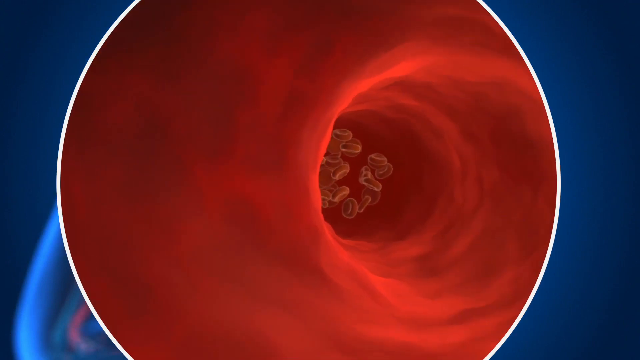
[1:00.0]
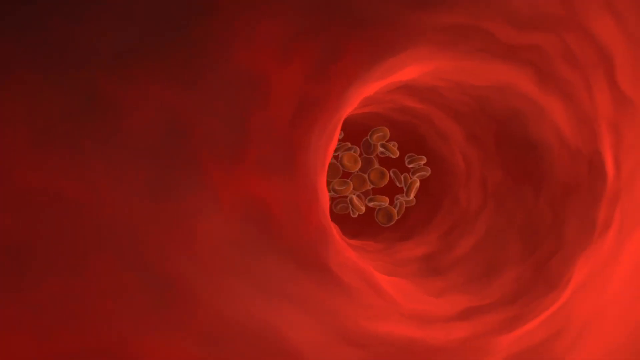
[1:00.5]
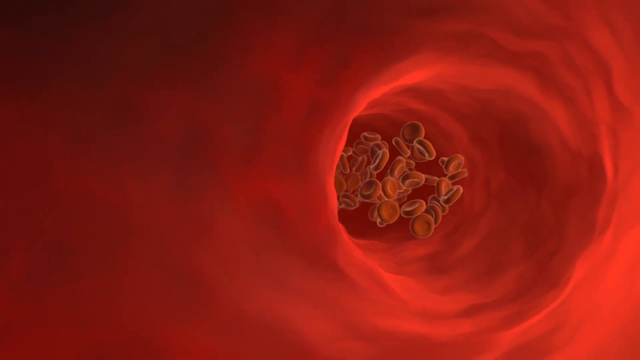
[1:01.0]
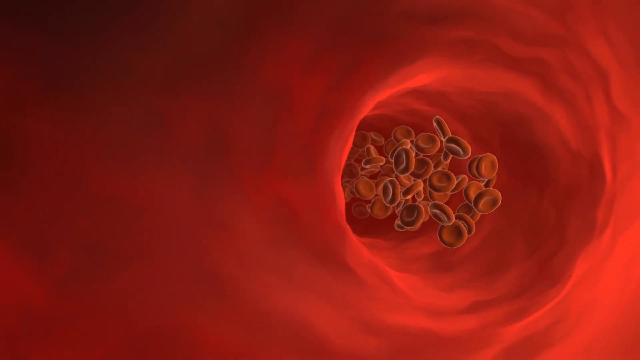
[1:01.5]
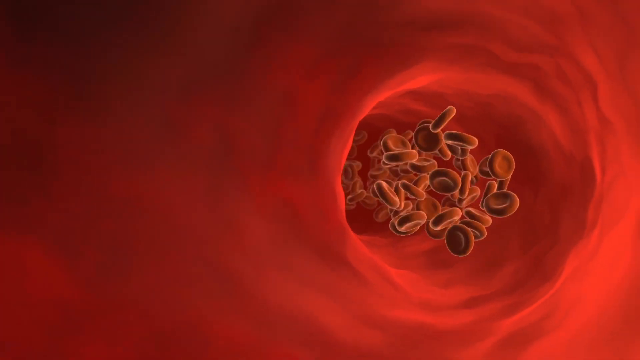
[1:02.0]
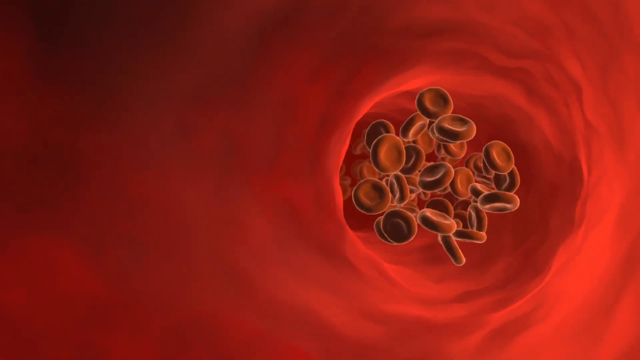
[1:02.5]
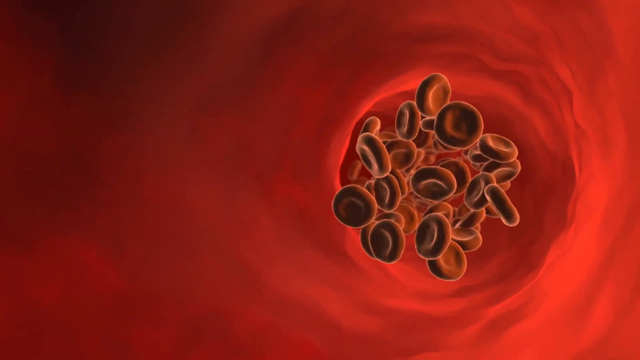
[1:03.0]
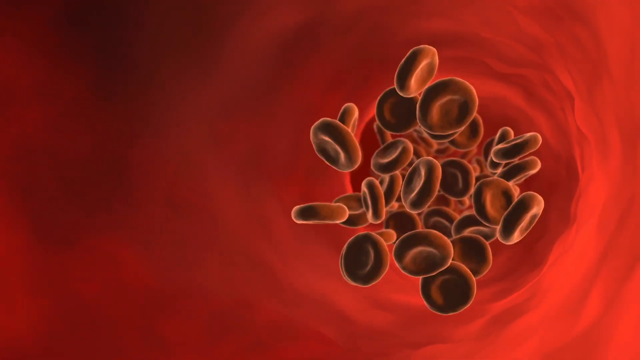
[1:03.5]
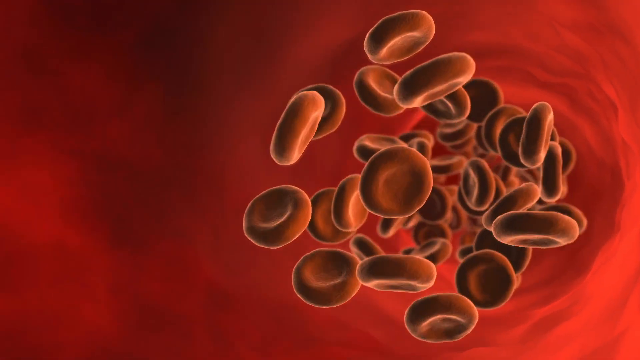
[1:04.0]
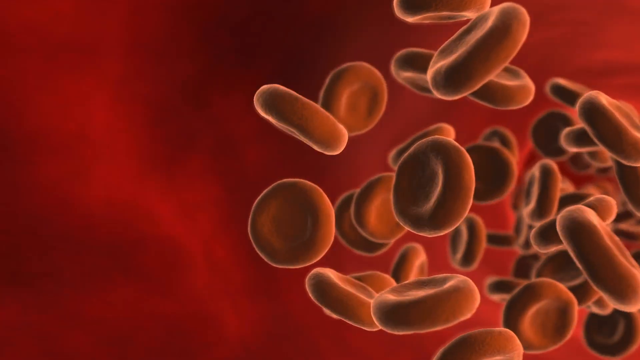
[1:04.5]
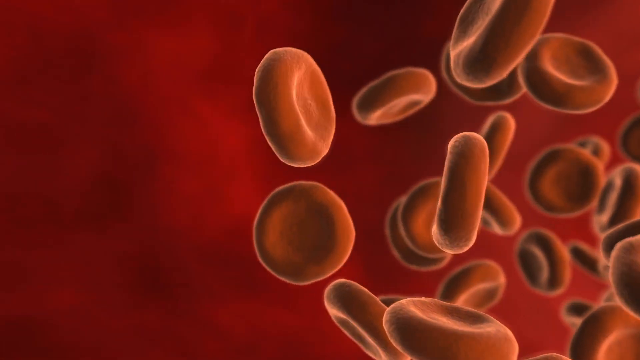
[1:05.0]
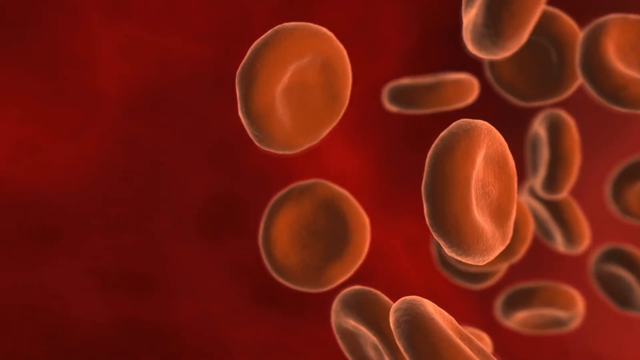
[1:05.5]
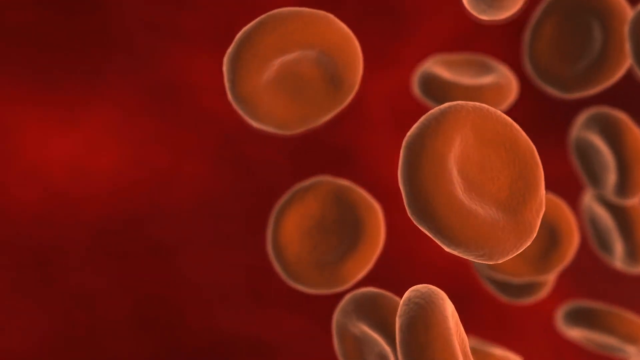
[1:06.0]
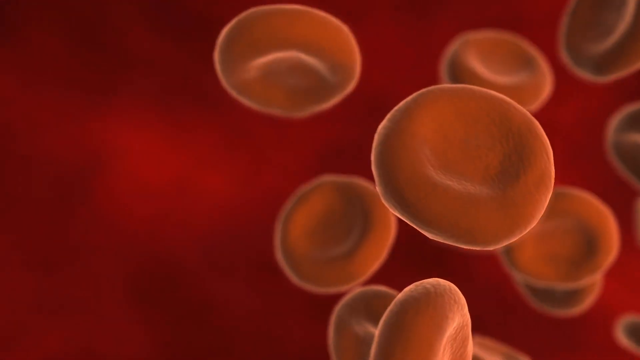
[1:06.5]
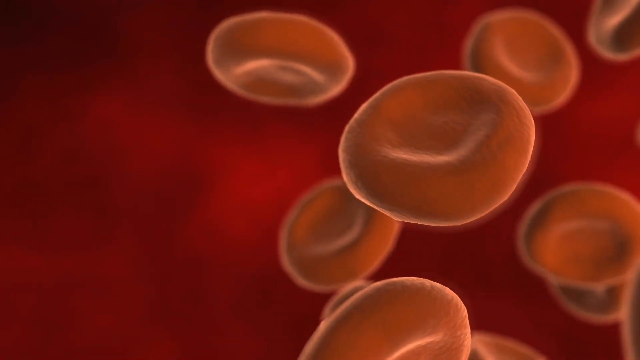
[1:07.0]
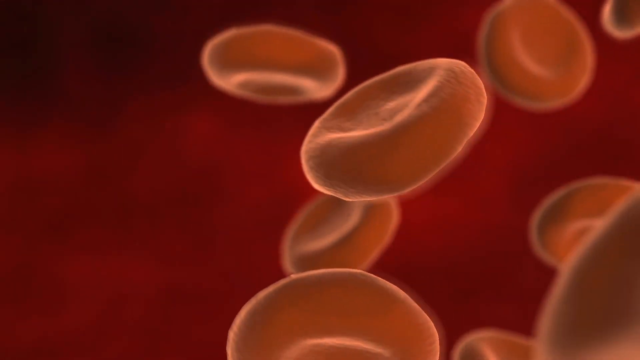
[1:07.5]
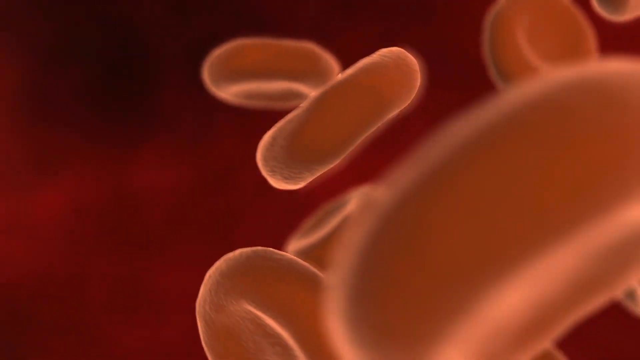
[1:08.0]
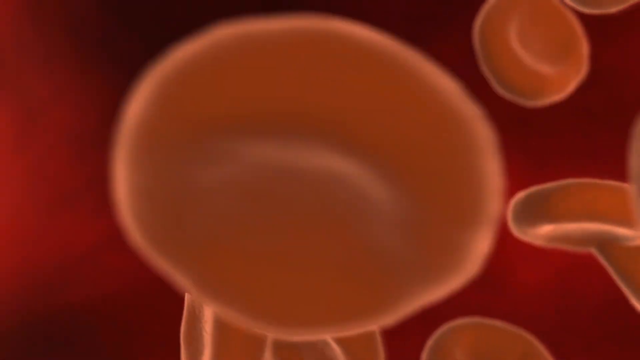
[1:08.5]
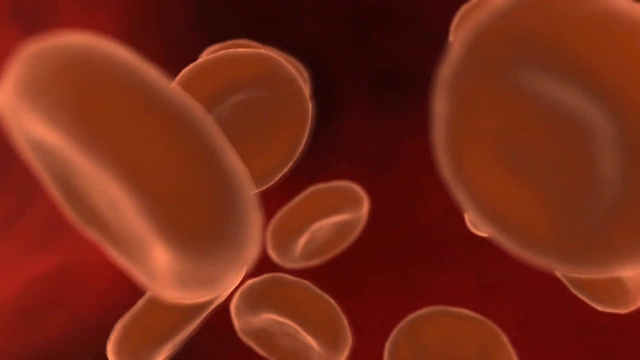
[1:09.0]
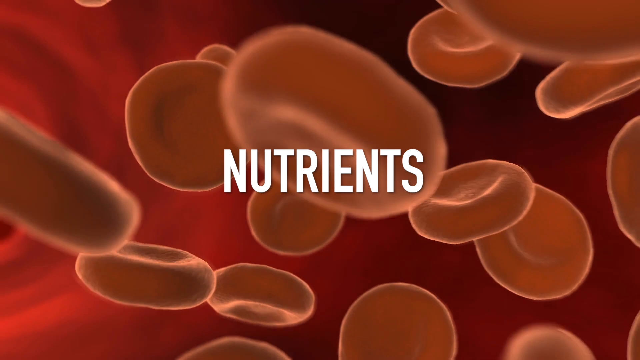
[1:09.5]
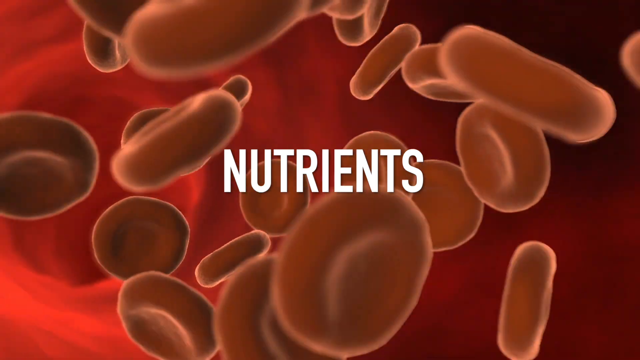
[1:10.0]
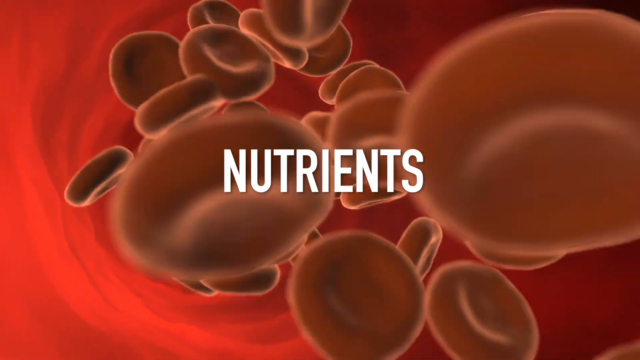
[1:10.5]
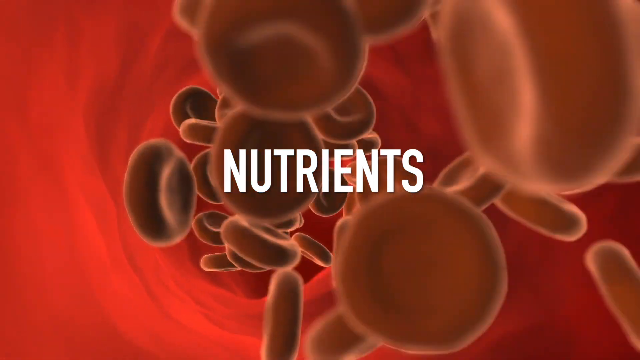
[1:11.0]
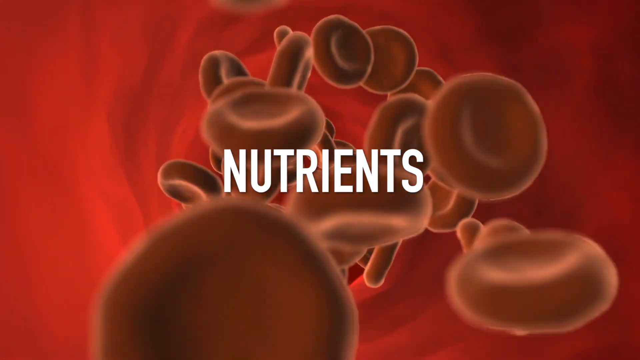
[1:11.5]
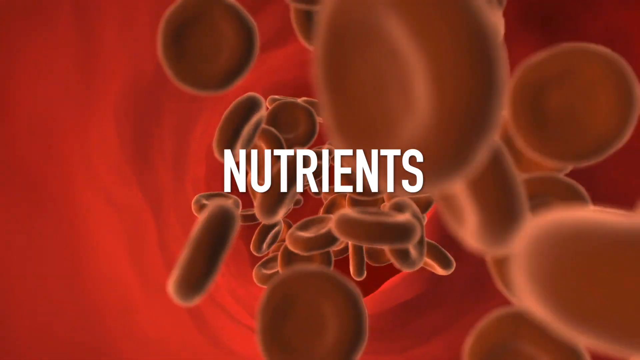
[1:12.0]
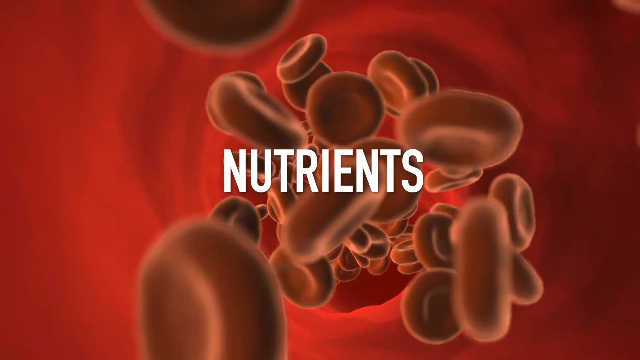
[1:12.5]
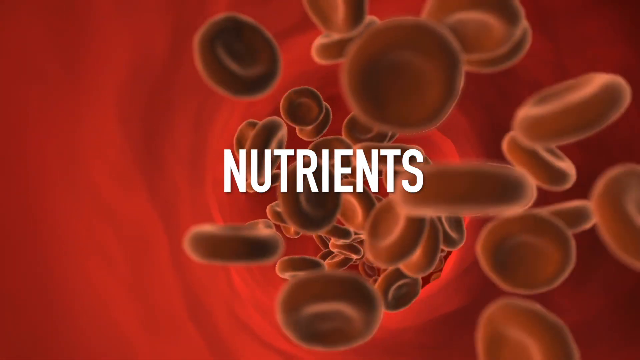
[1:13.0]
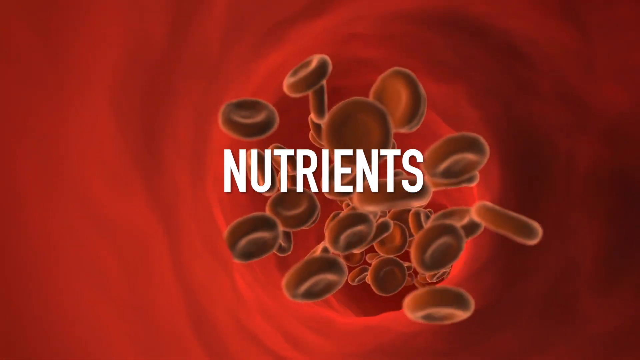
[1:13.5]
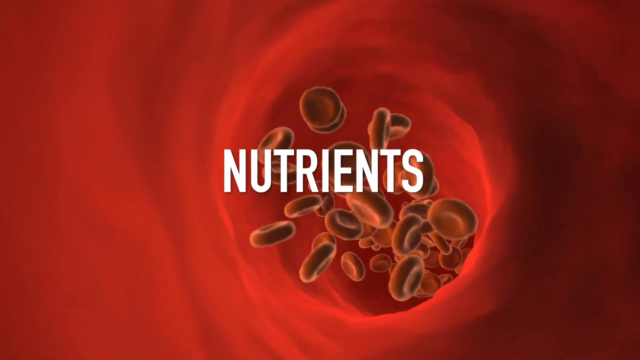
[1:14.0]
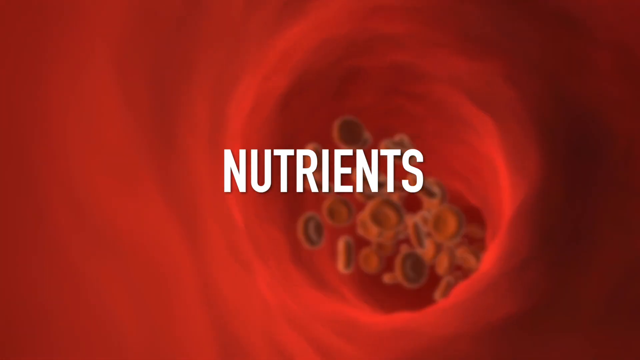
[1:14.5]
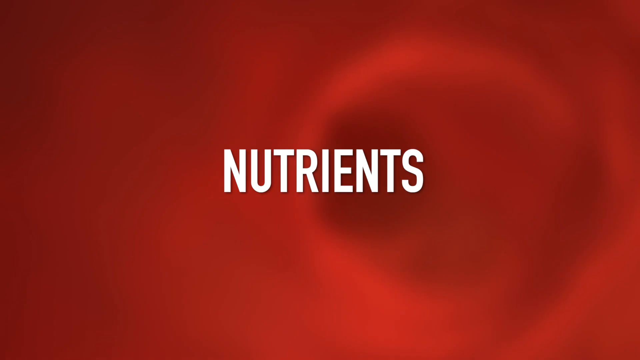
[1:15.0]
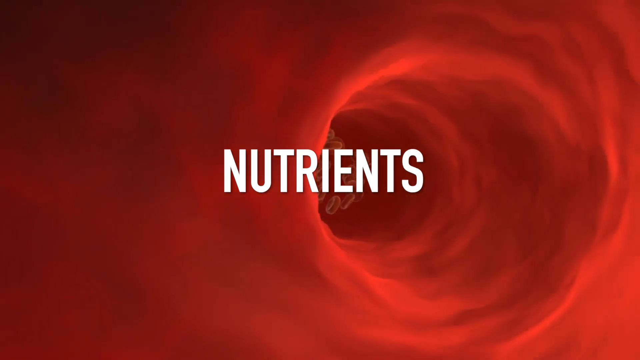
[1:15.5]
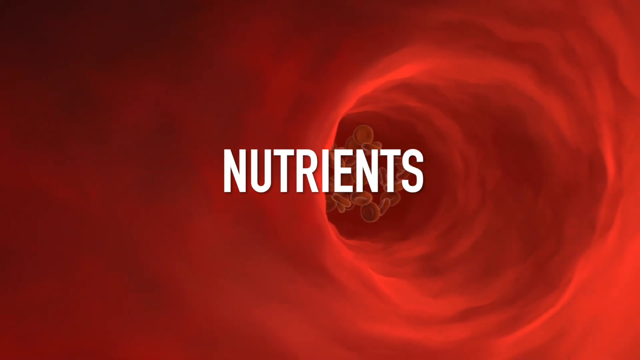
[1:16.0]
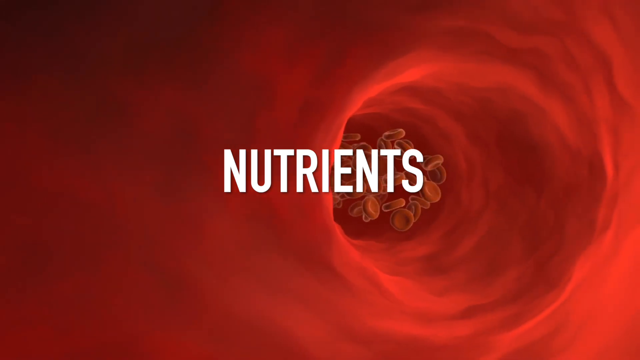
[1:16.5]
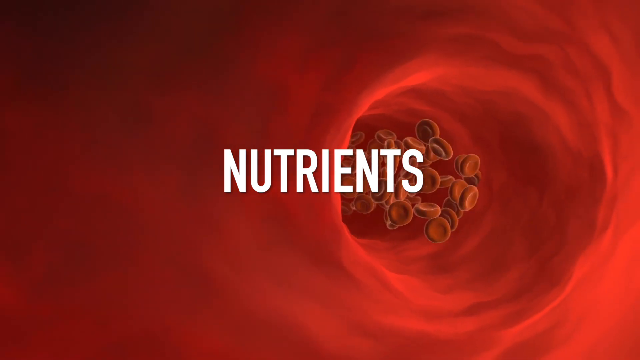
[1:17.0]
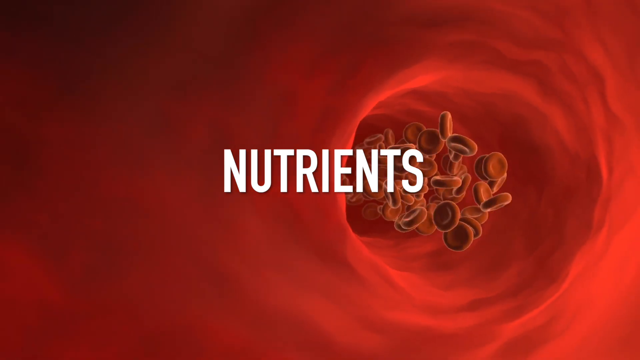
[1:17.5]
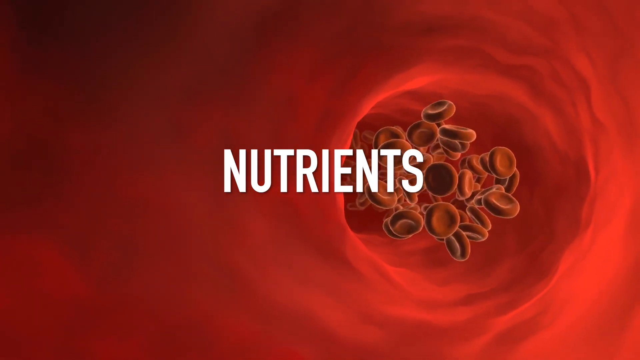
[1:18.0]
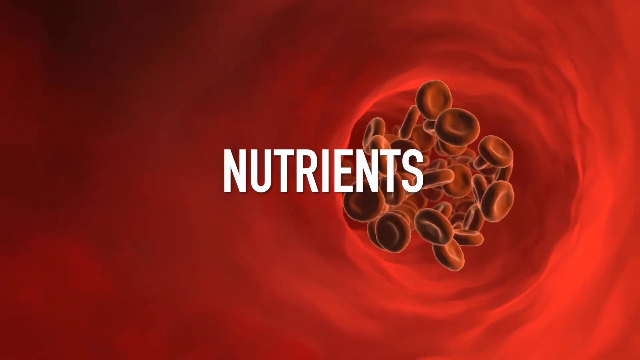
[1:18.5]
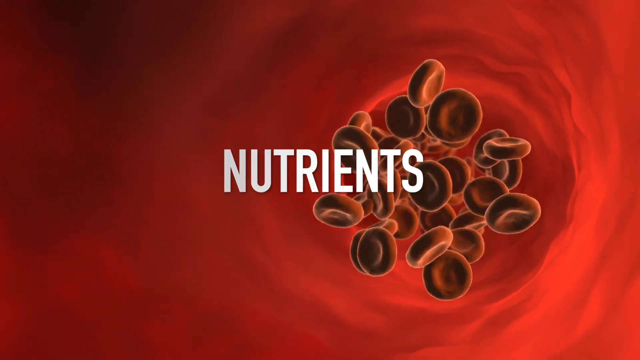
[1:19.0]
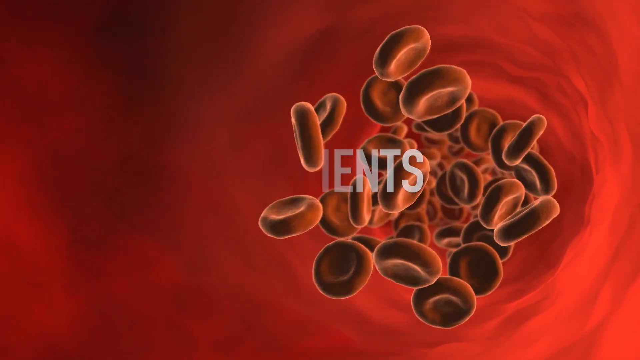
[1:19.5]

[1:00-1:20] The view moves into the body, inside a blood vessel, where what look to be red blood cells travel down the vessel. The word "nutrients" appears in white font in the middle of the screen. The view follows the blood cells as they slowly wind and bend along the path. After the word disappears, the blood cells keep moving through the vessel, most likely some sort of artery. There seem to be maybe 50 red blood cells in total moving slowly through it.